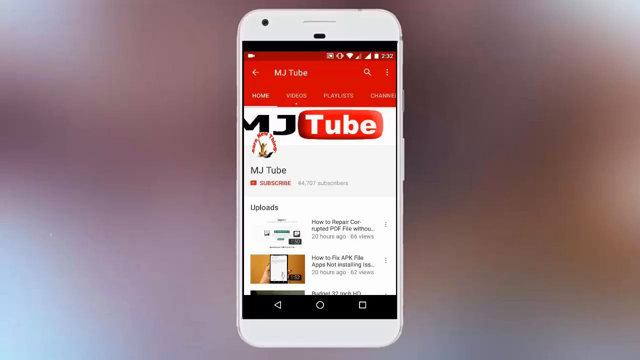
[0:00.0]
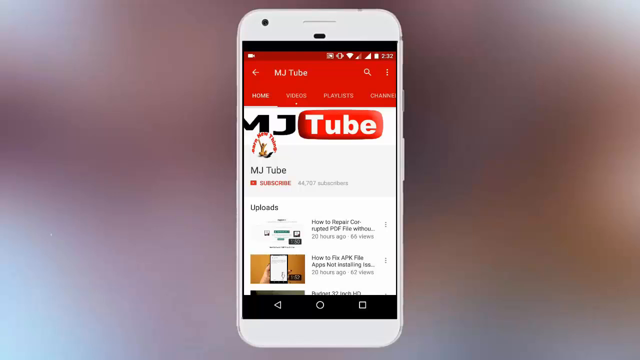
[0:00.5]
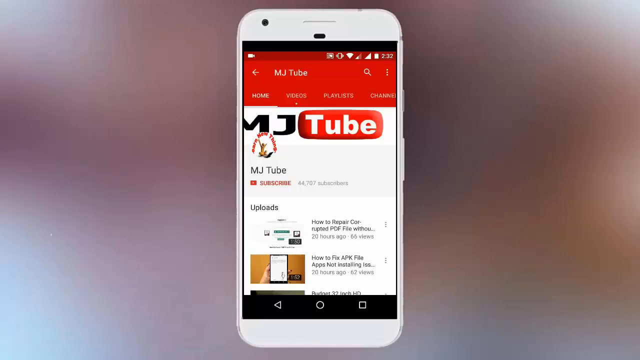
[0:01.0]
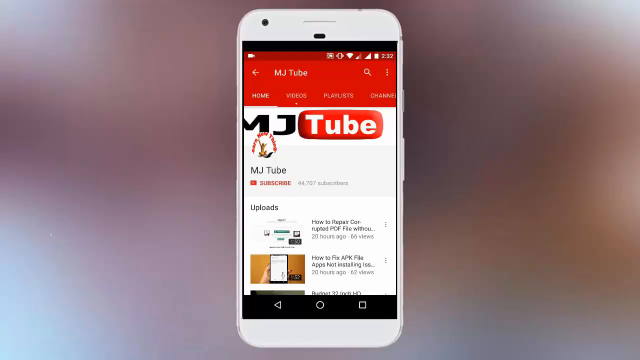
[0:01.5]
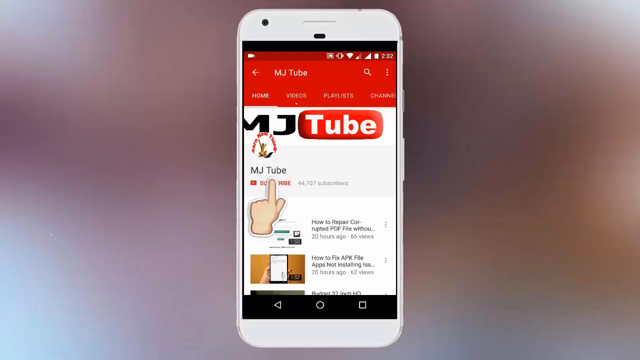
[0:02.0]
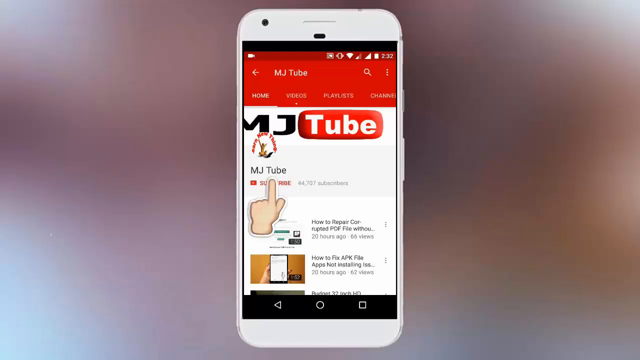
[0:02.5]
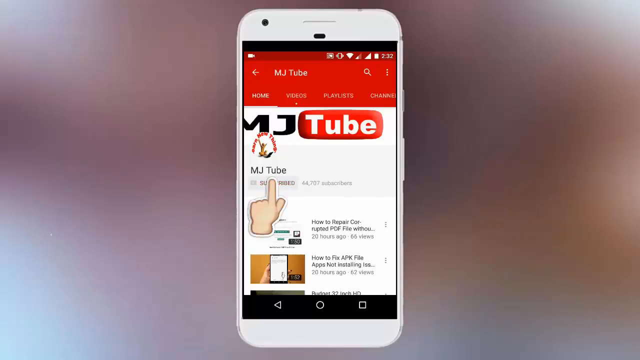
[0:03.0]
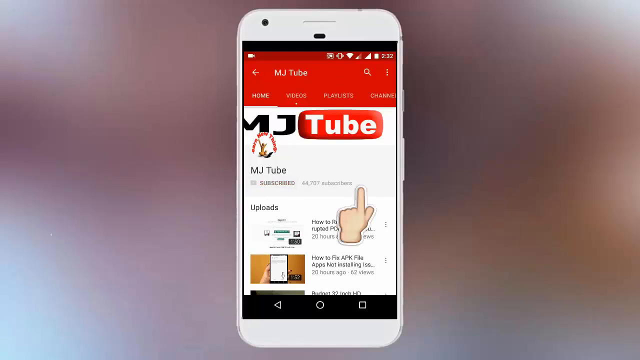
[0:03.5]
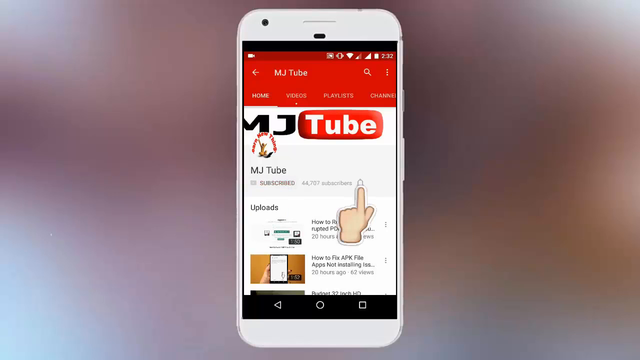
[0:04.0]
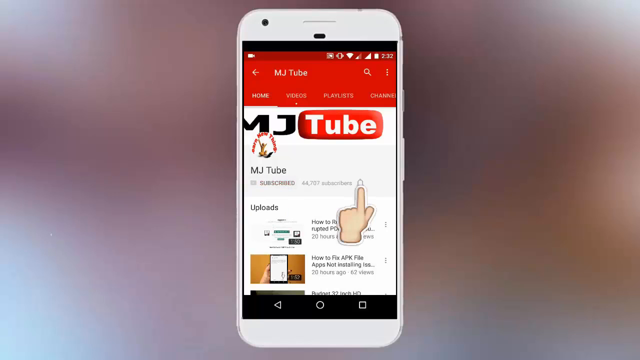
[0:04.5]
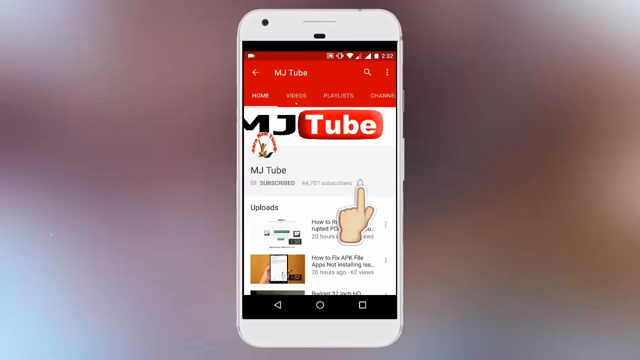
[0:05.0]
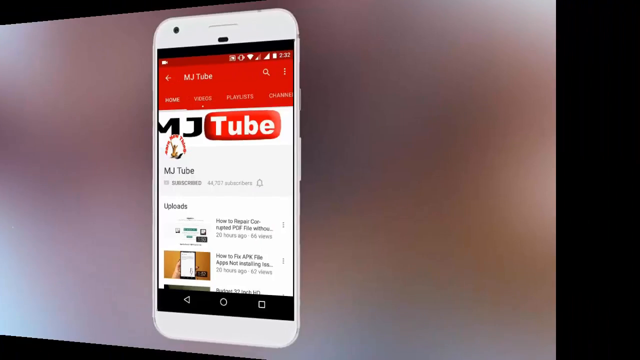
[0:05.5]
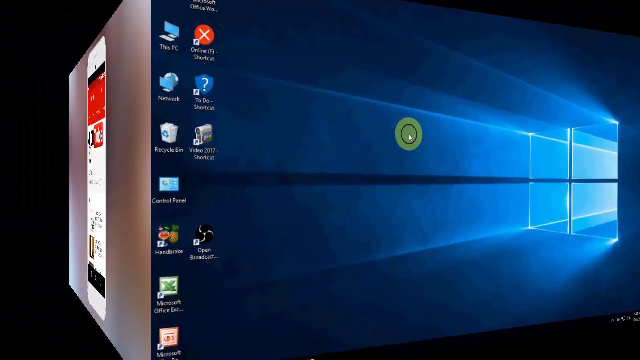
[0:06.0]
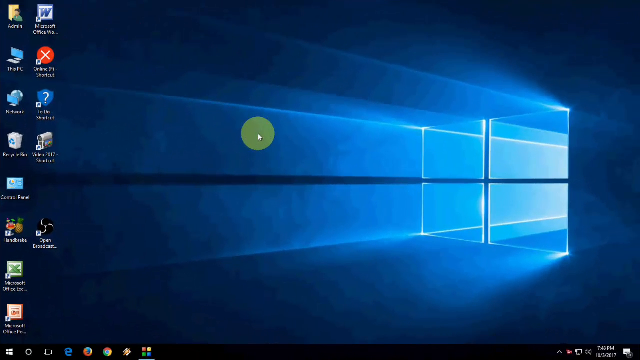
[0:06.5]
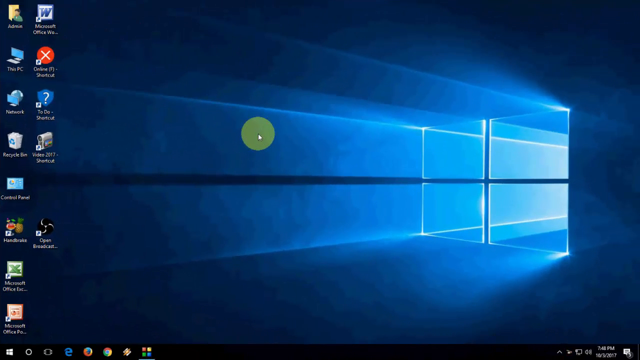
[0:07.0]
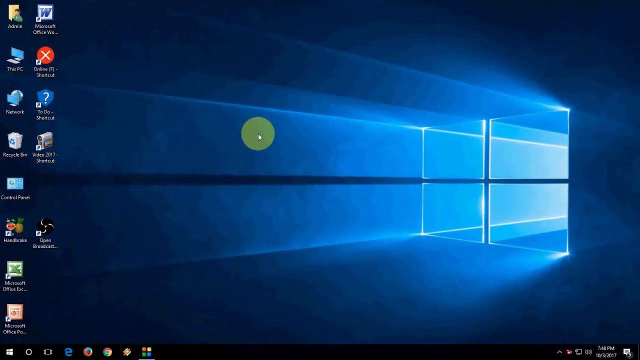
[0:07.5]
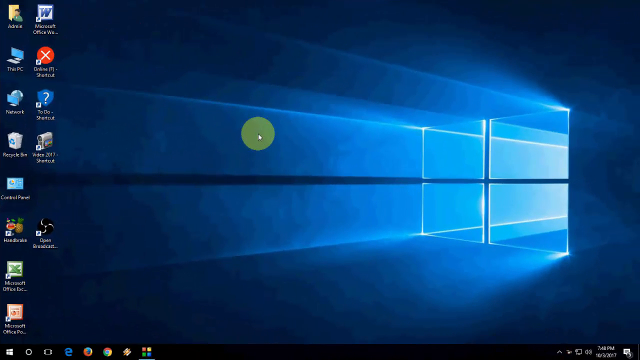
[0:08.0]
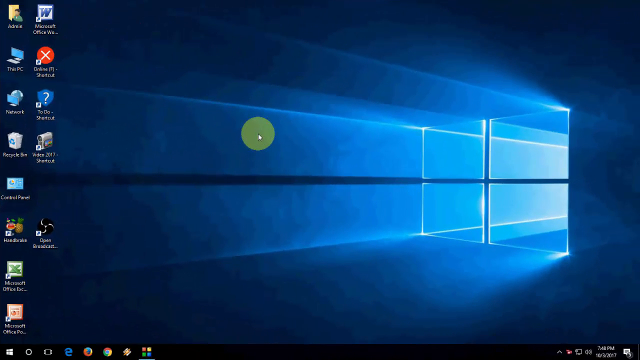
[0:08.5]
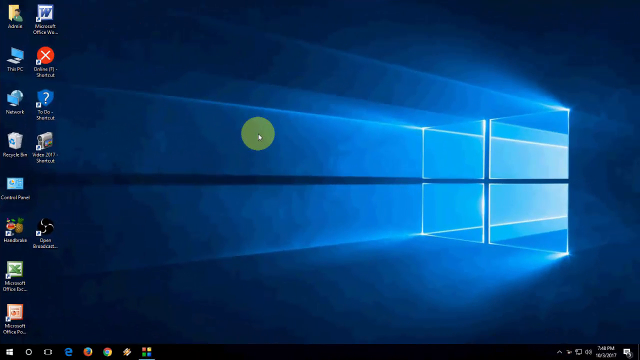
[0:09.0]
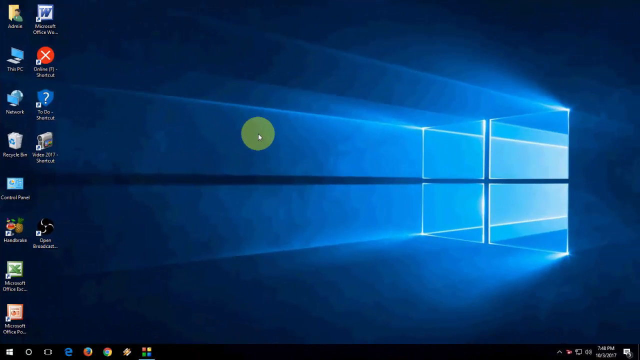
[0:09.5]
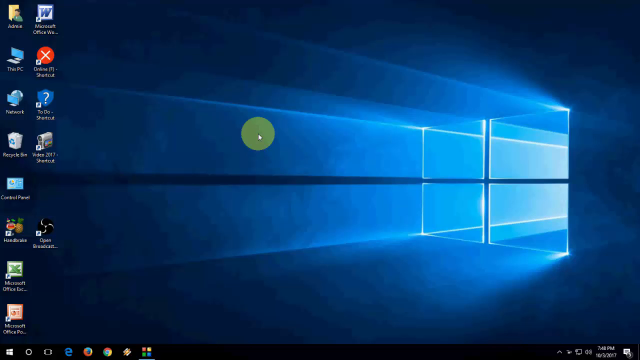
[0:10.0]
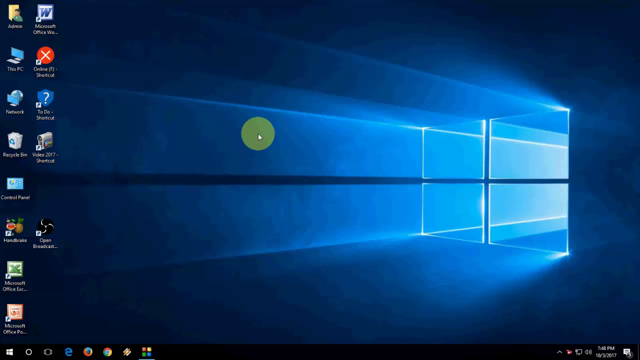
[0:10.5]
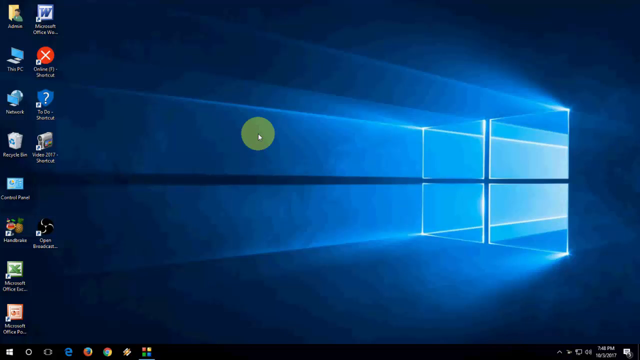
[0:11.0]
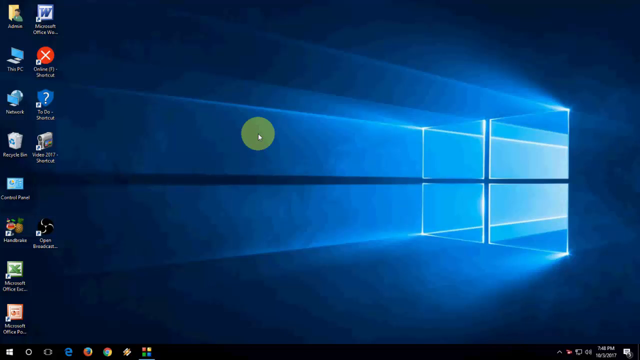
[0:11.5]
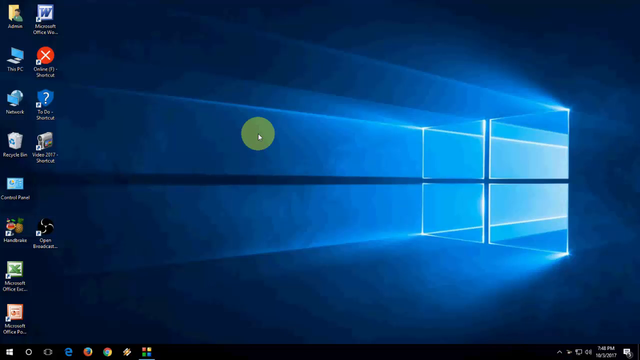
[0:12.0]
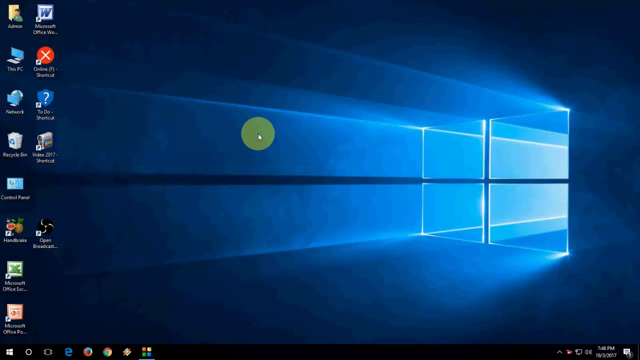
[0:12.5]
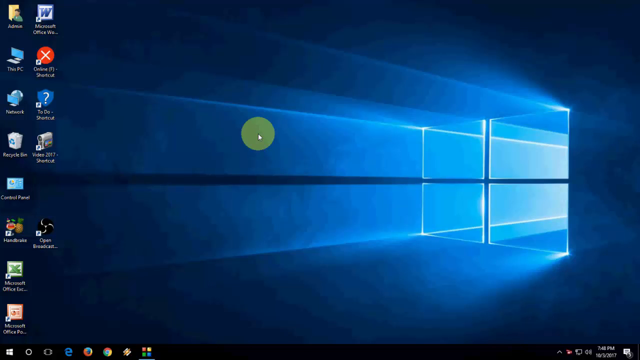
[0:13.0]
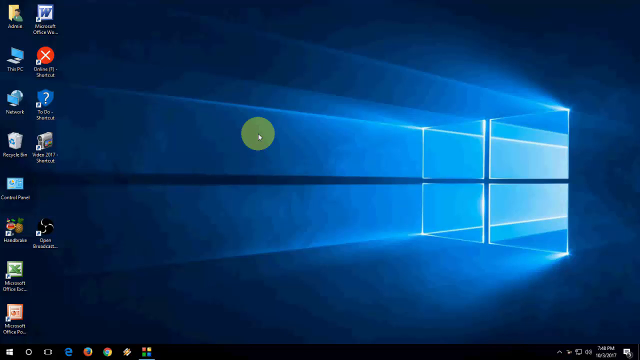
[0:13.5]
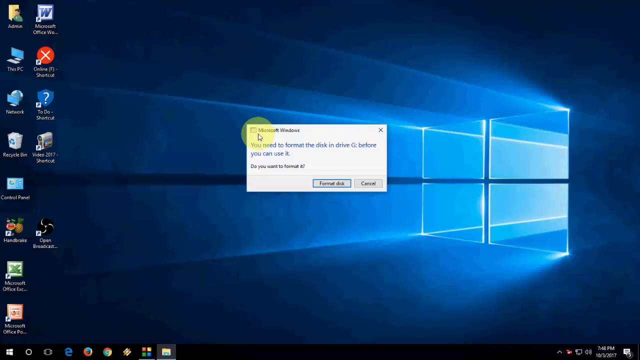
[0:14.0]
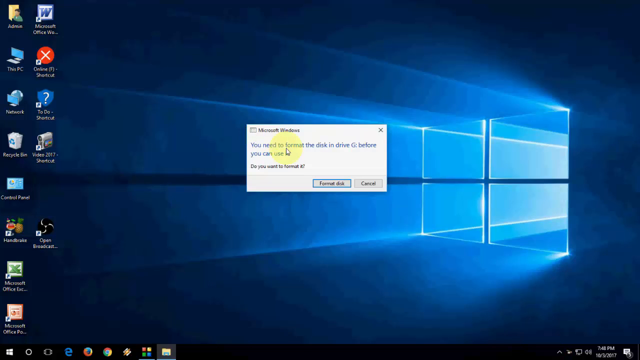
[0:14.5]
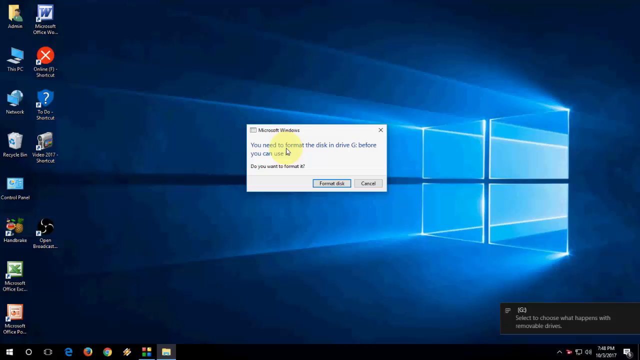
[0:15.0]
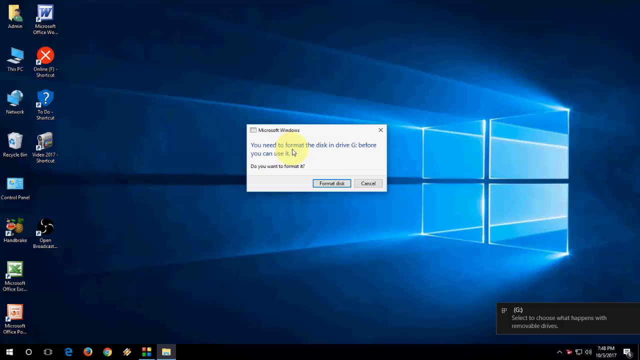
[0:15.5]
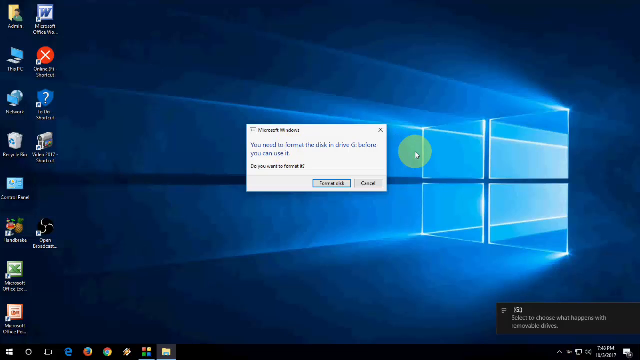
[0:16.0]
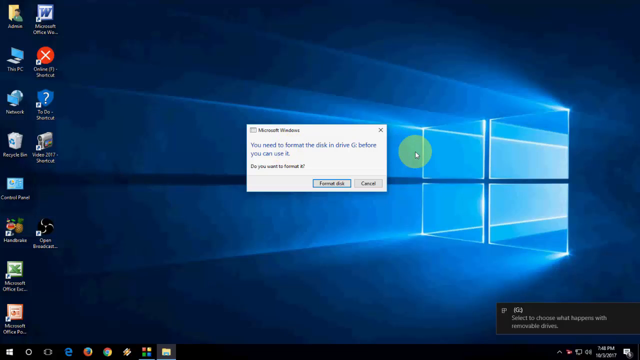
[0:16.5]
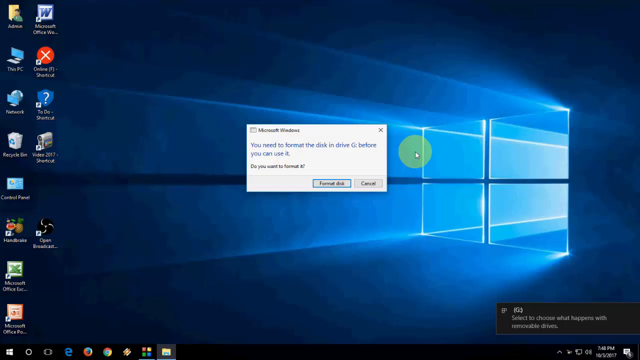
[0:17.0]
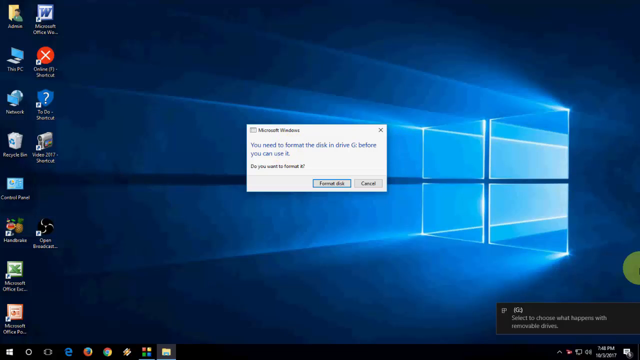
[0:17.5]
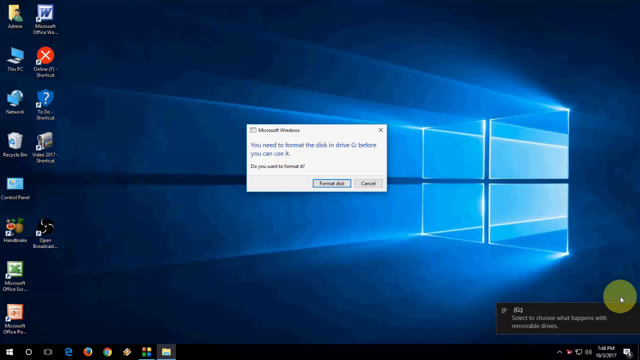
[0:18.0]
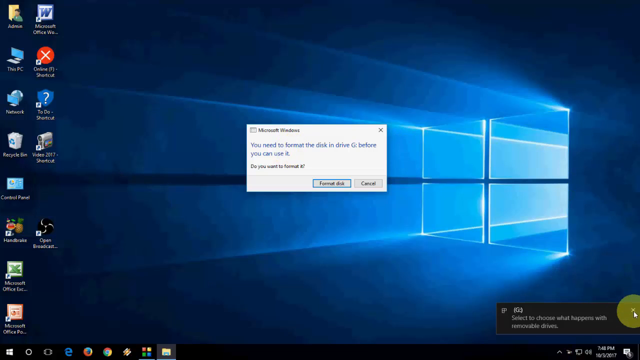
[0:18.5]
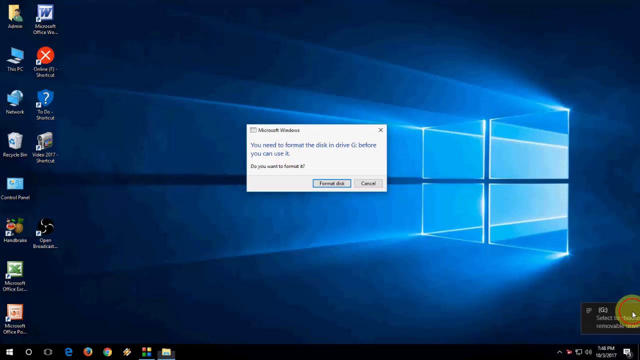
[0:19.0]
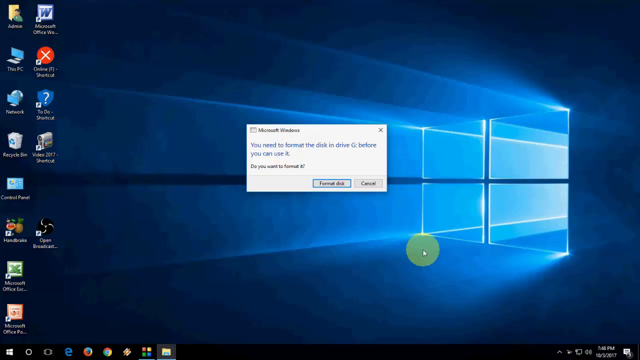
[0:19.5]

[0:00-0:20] A white phone, apparently an Android, appears in the center of the screen. In the middle of the screen is YouTube, open on a YouTube page called MjTube. A hand pops up and indicates clicking the bell for the MjTube YouTube channel, apparently telling the viewer to turn on notifications for the channel. The camera then rotates to a Windows desktop with many apps on it and a blue-themed background showing the Windows logo and "Microsoft Windows". A pop-up appears saying the disk in drive G needs to be formatted and asking whether to format it.